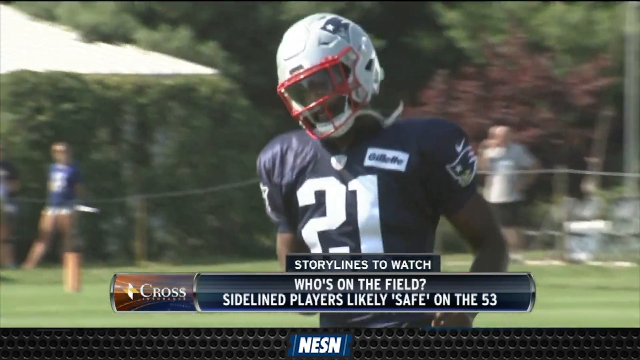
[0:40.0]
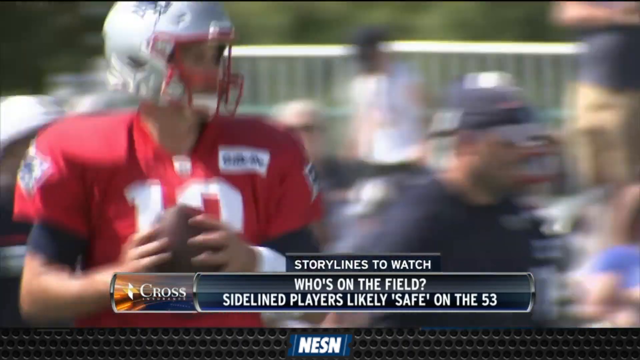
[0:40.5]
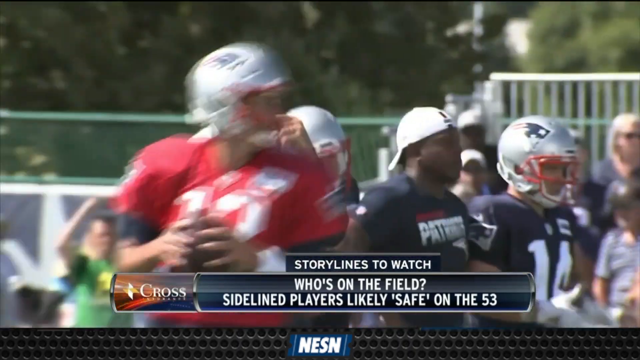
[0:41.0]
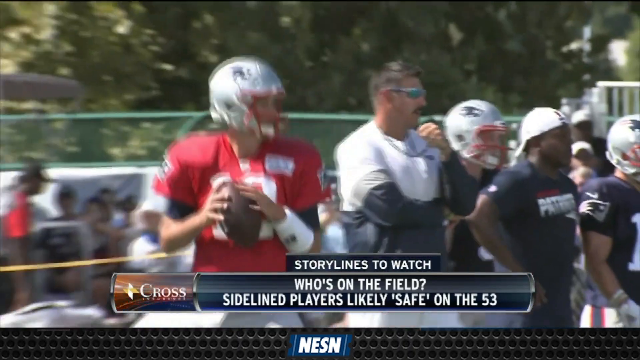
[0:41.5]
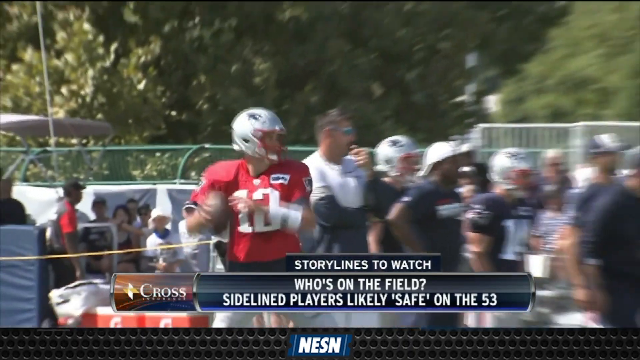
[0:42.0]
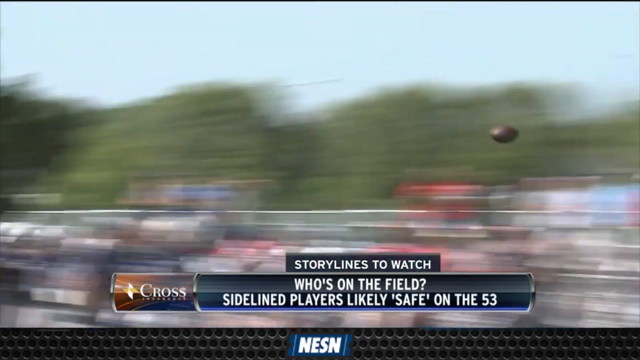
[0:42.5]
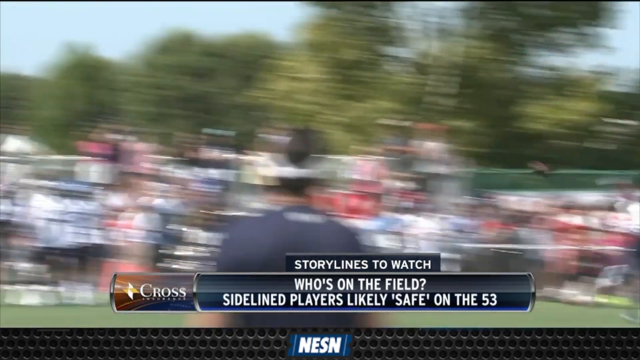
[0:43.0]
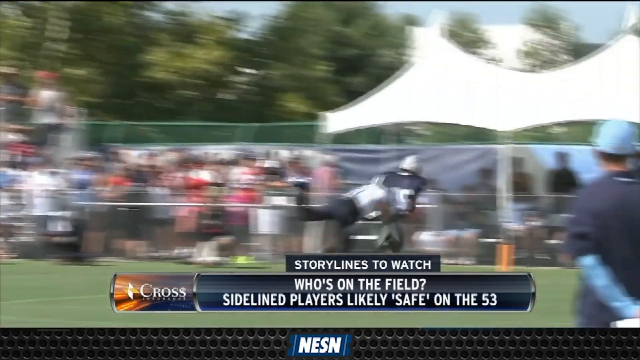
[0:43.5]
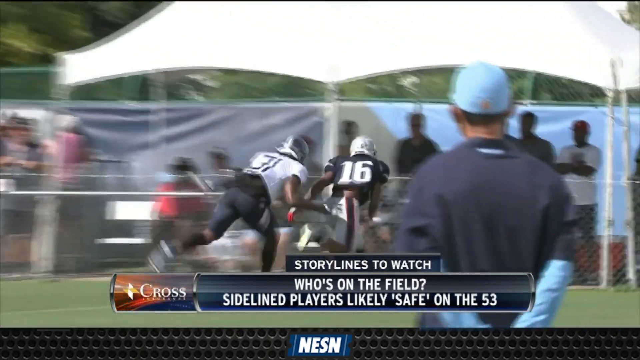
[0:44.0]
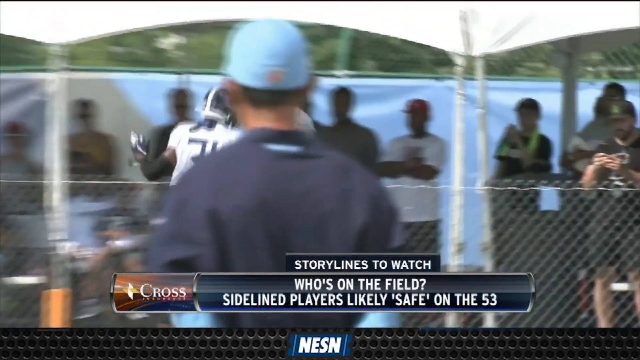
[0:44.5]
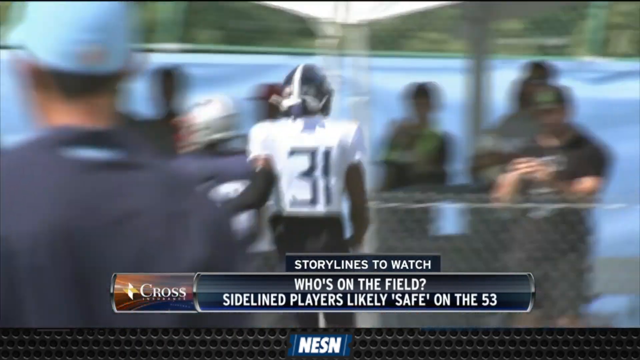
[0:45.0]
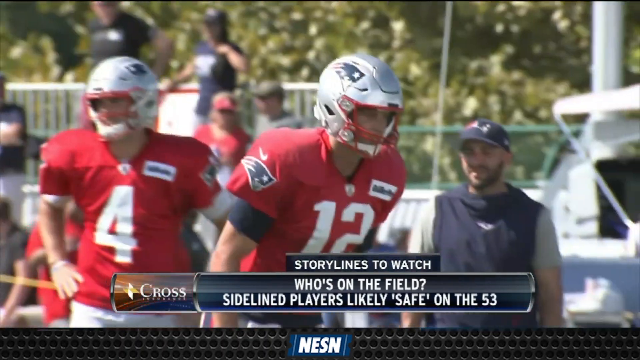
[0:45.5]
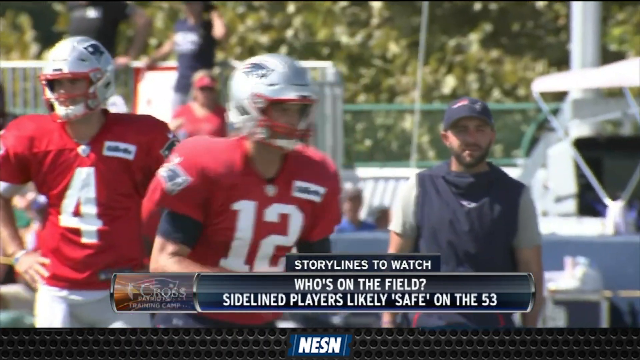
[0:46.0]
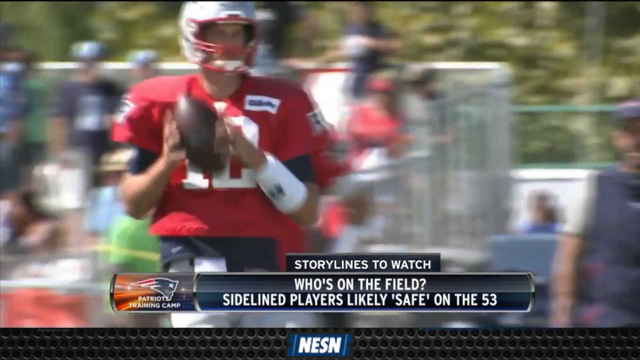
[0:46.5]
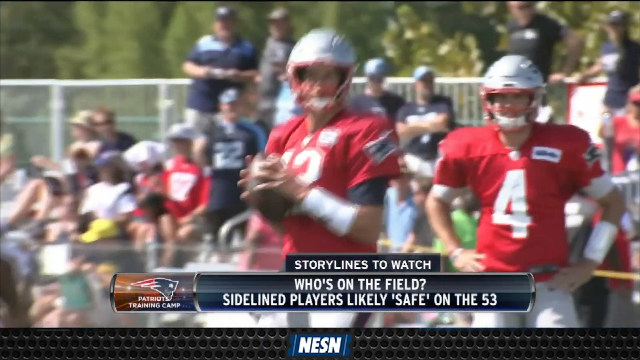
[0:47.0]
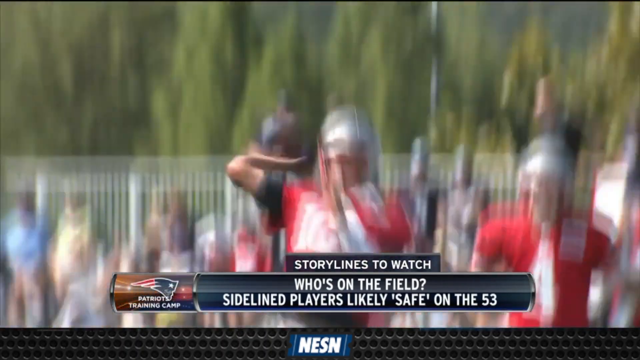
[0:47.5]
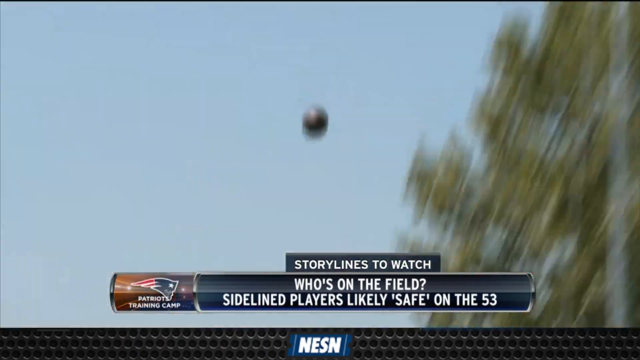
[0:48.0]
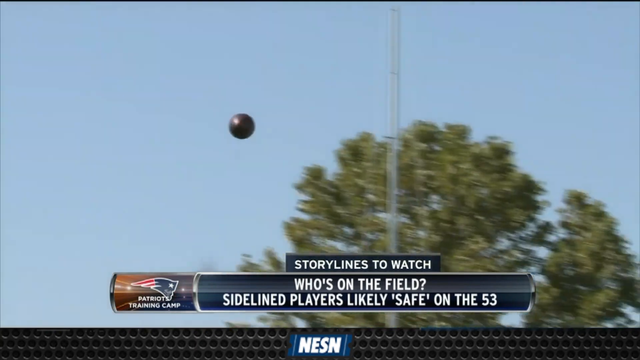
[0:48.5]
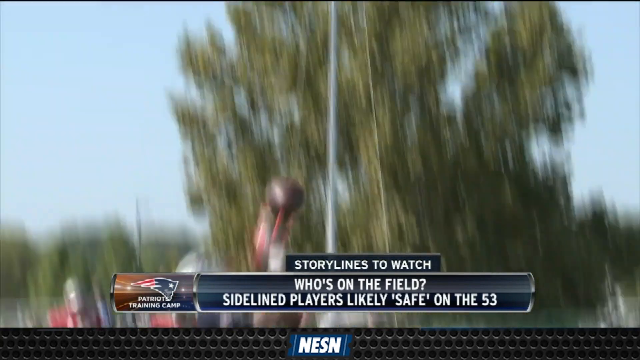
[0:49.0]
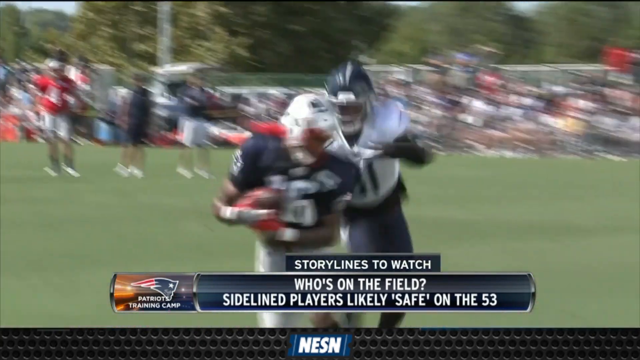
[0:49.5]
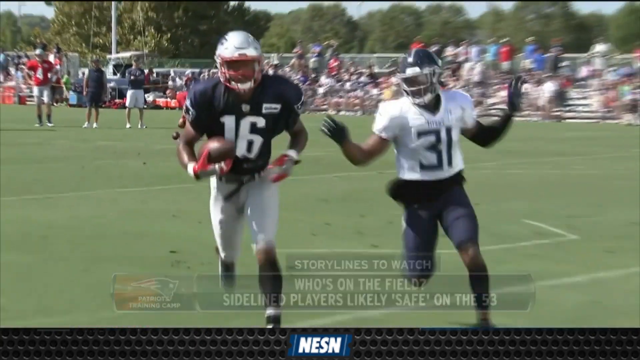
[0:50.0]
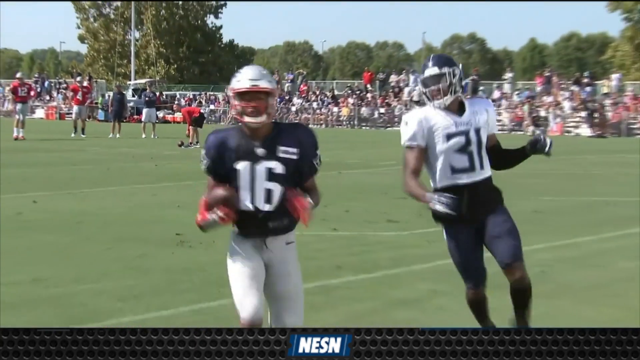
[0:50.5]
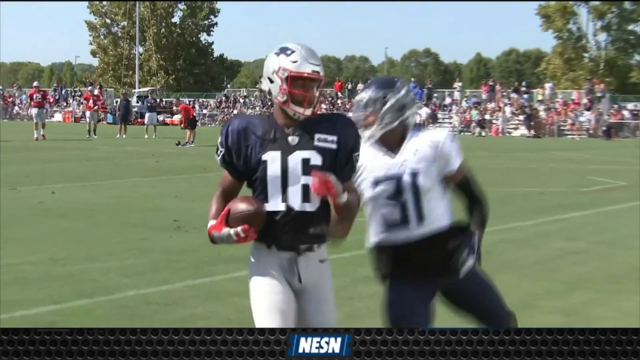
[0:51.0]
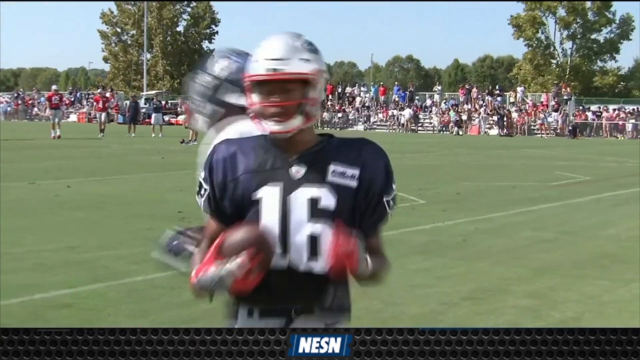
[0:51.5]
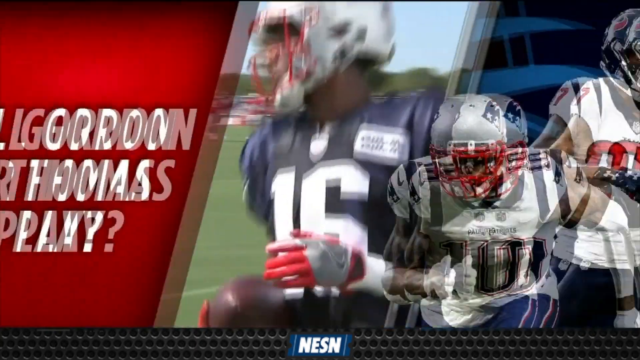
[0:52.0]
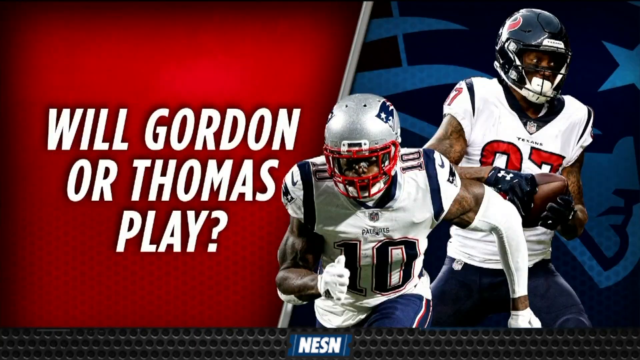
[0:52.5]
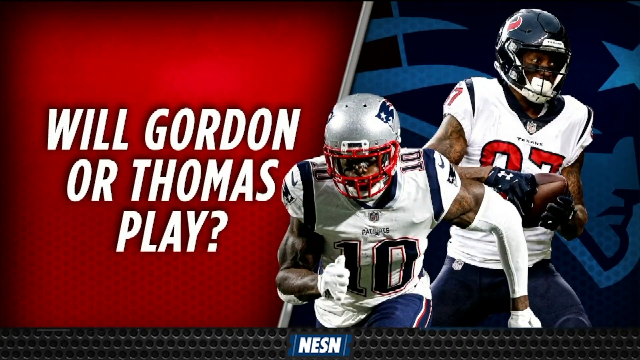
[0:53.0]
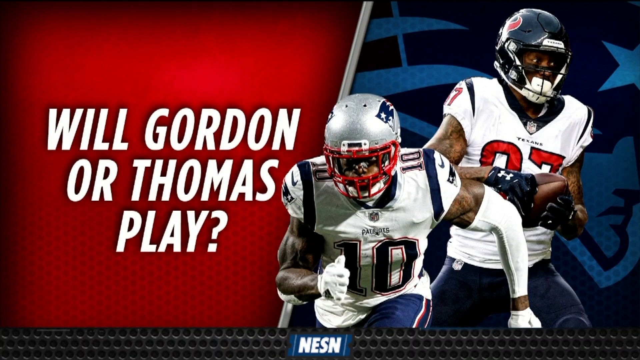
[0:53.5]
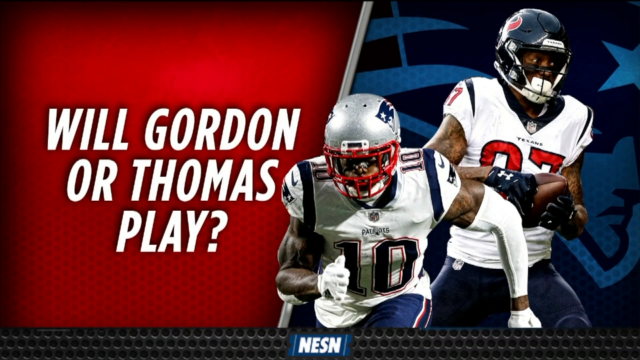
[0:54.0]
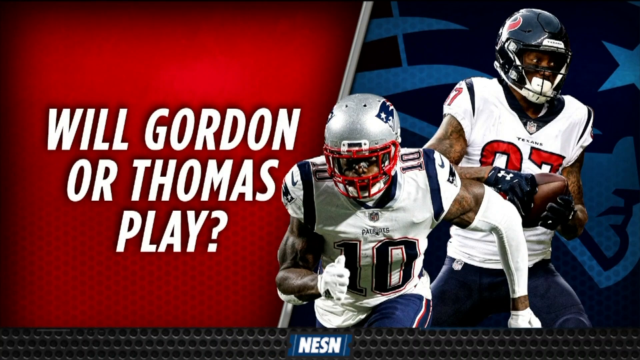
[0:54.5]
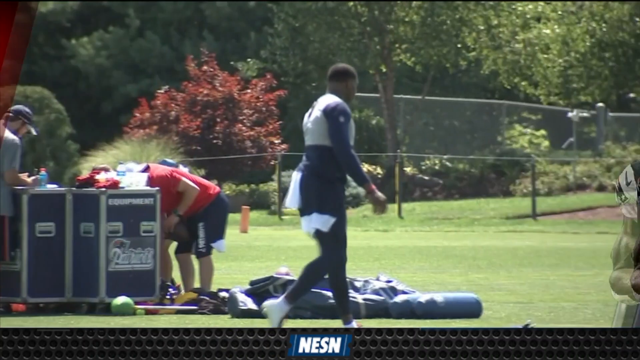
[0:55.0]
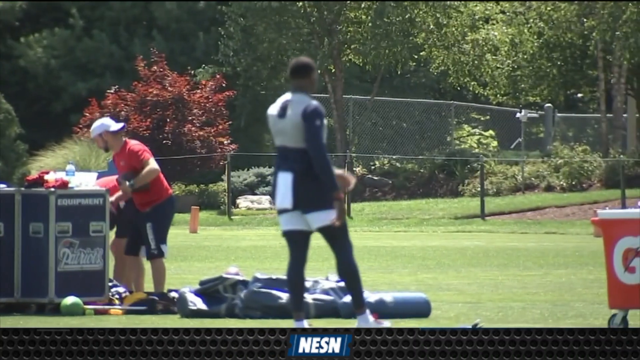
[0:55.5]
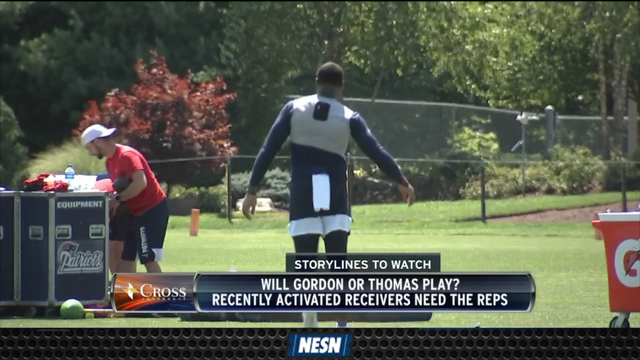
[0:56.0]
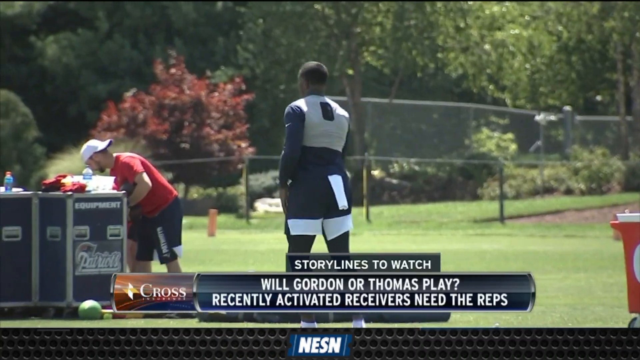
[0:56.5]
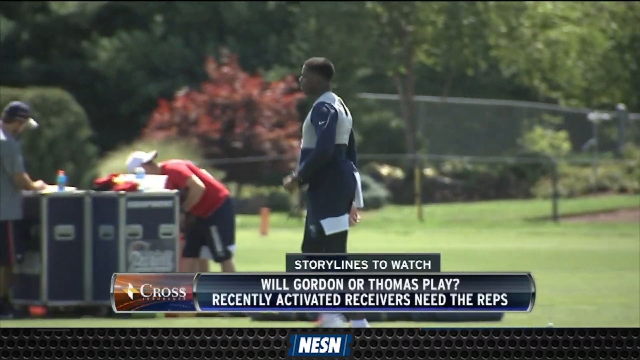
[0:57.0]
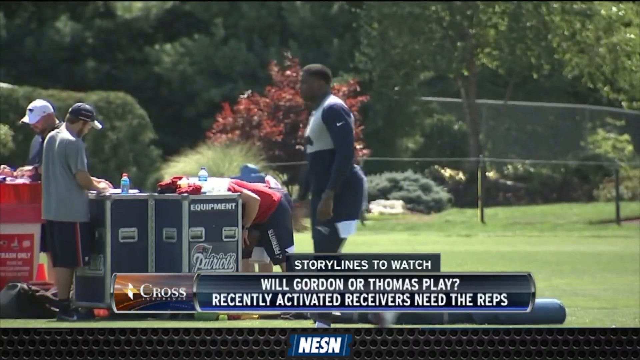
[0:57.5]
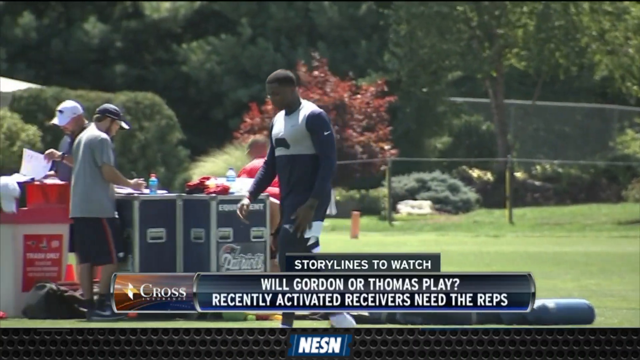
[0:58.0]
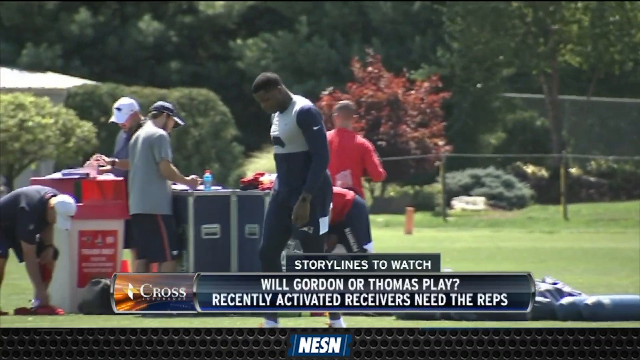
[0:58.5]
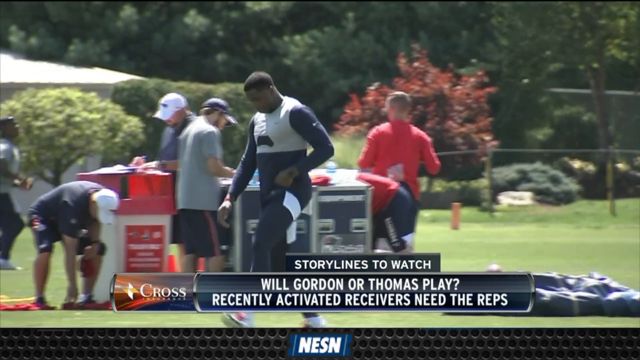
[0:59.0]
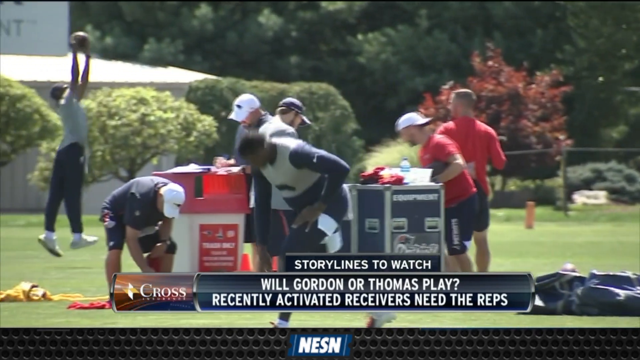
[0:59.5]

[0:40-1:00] At first there is a poster with two guys, apparently under 45 years old. Then a guy appears stretching his legs and exercising, with some guys behind him; he appears to be between 30 and 40 years old. Then a lot of guys appear exercising in the field, wearing navy blue jerseys, and they are of normal size. Some are exercising, some are running around the field throwing the ball, and some are trying to catch it. They appear to be playing rugby or possibly exercising.